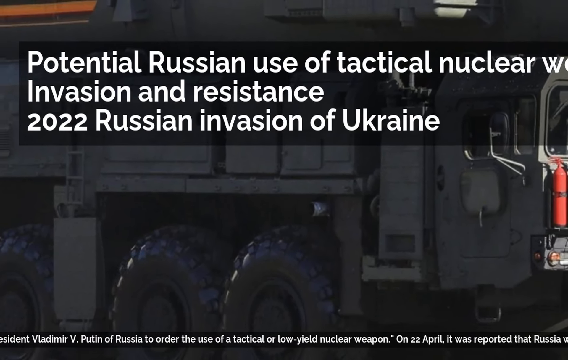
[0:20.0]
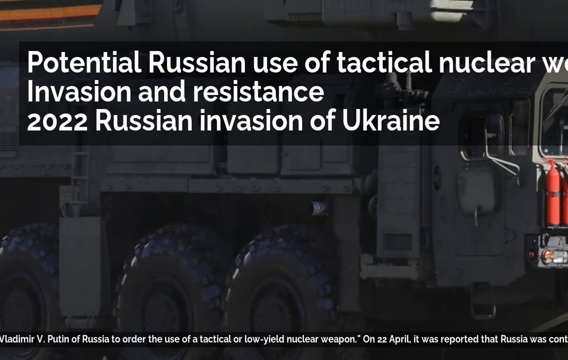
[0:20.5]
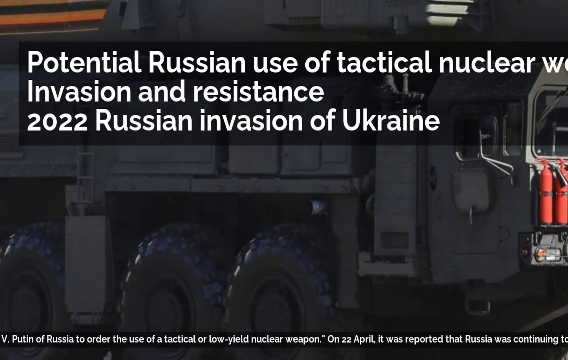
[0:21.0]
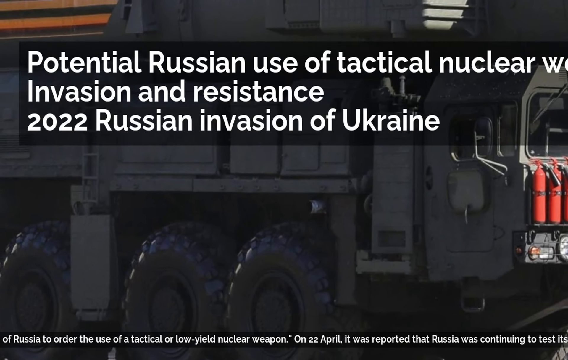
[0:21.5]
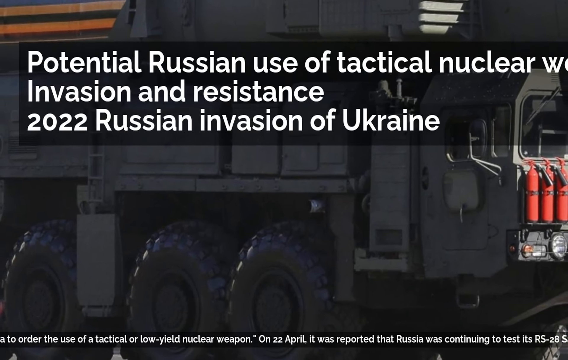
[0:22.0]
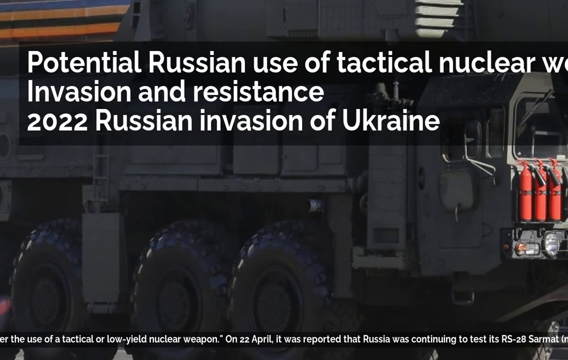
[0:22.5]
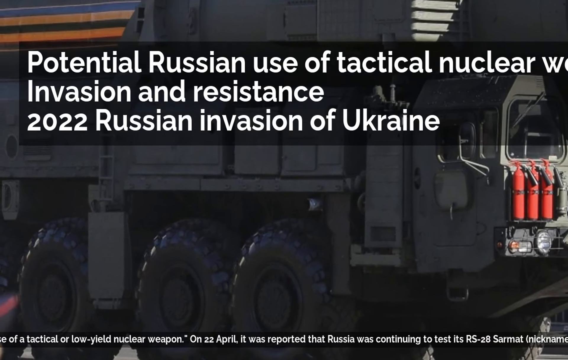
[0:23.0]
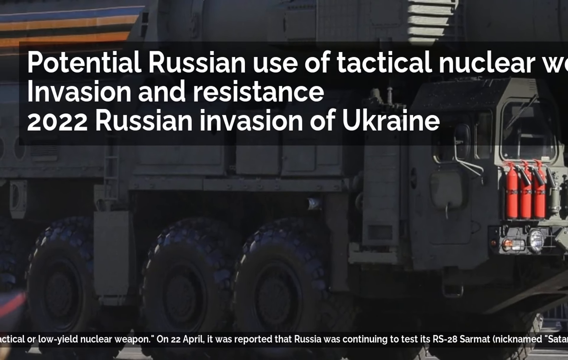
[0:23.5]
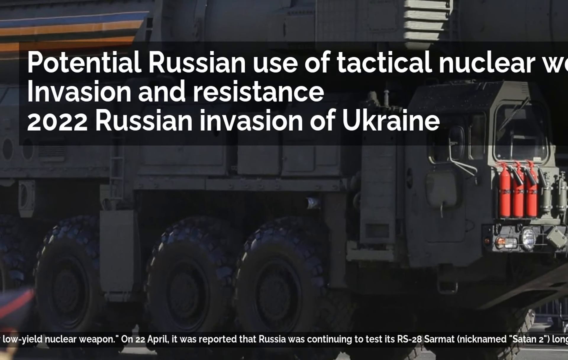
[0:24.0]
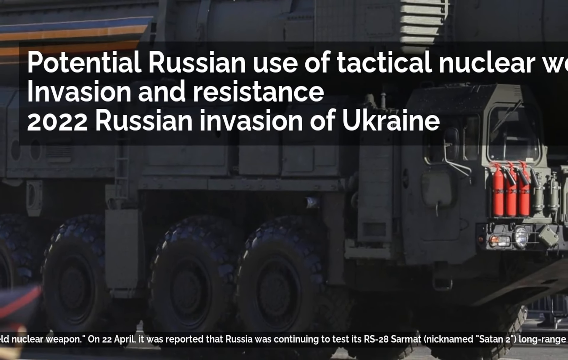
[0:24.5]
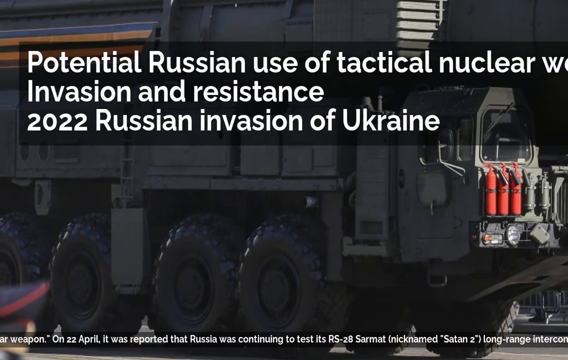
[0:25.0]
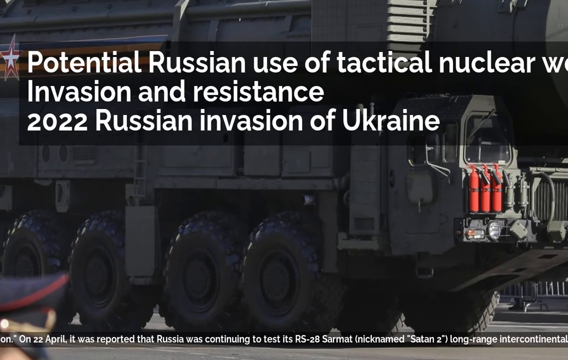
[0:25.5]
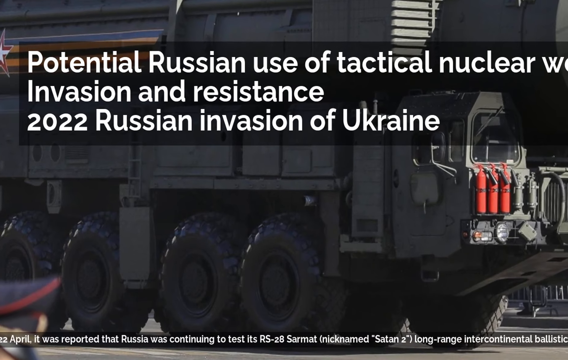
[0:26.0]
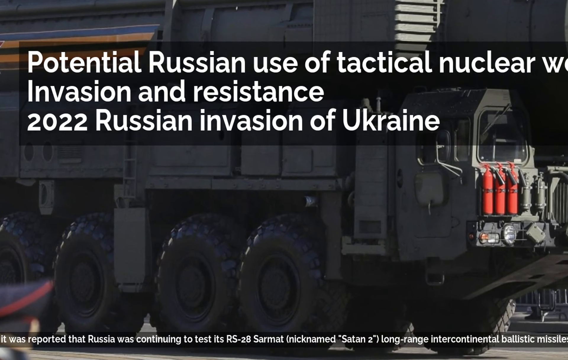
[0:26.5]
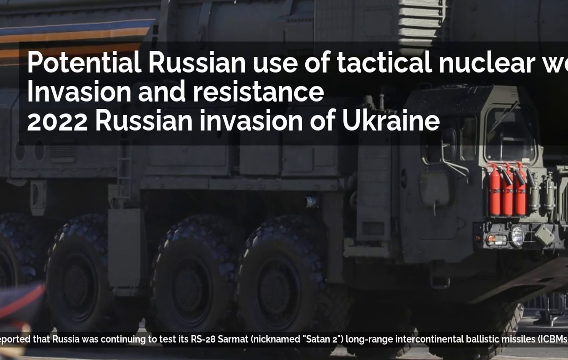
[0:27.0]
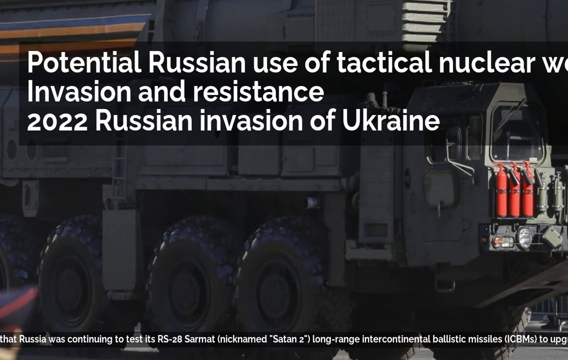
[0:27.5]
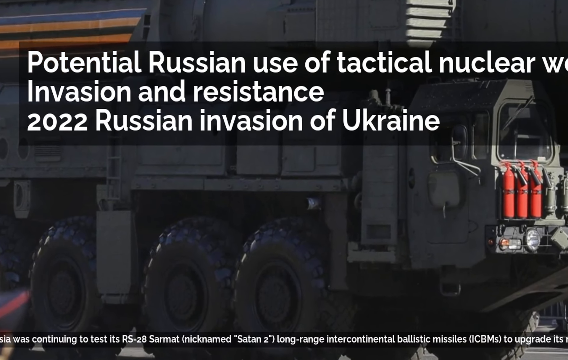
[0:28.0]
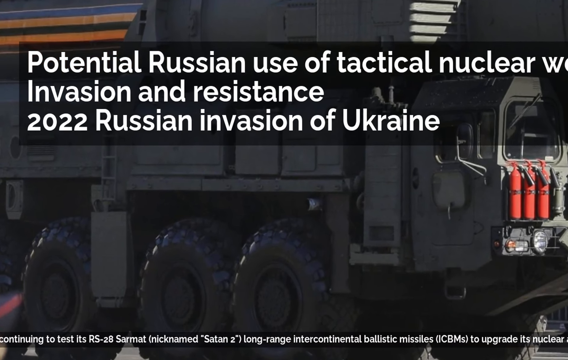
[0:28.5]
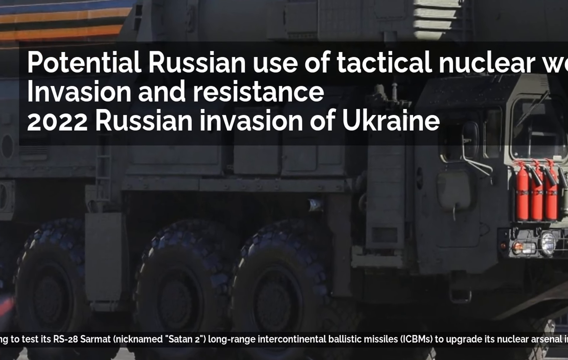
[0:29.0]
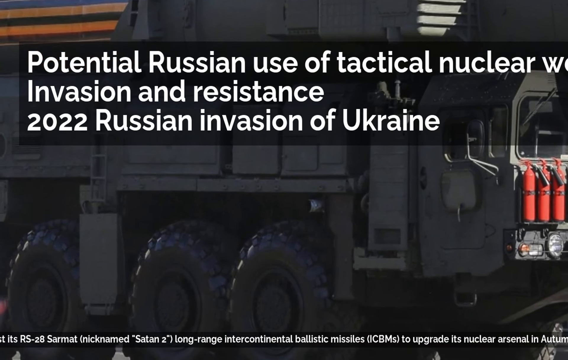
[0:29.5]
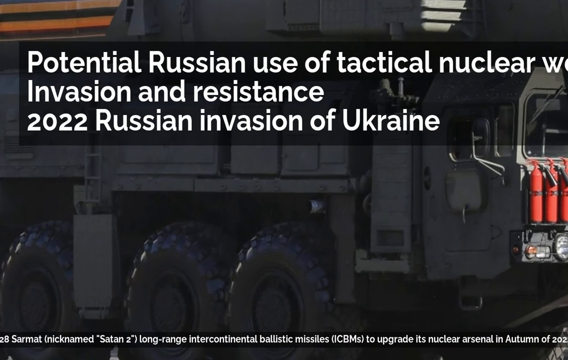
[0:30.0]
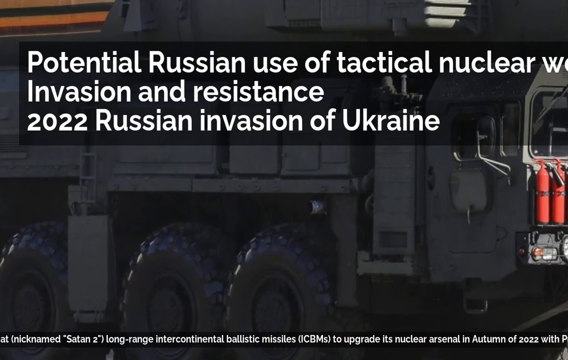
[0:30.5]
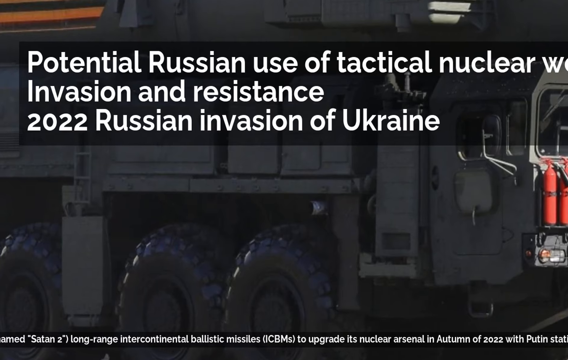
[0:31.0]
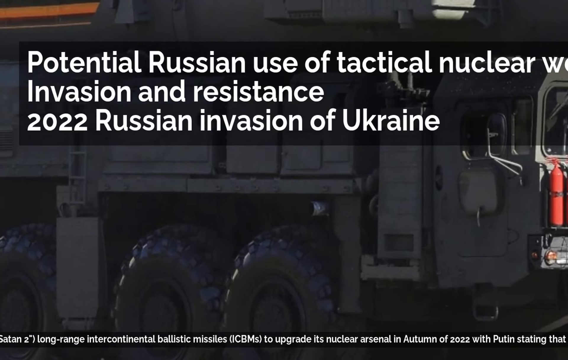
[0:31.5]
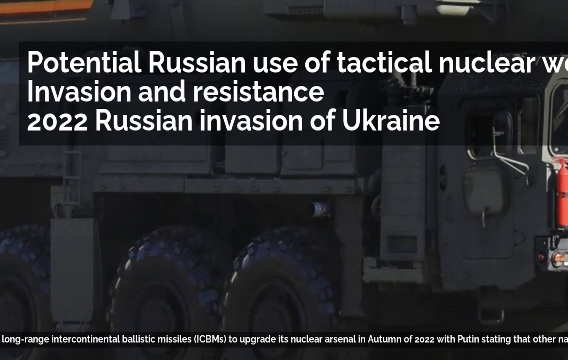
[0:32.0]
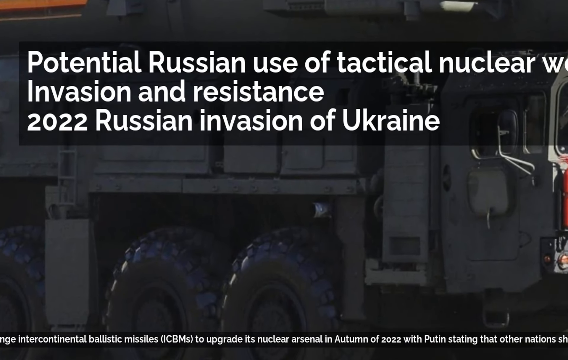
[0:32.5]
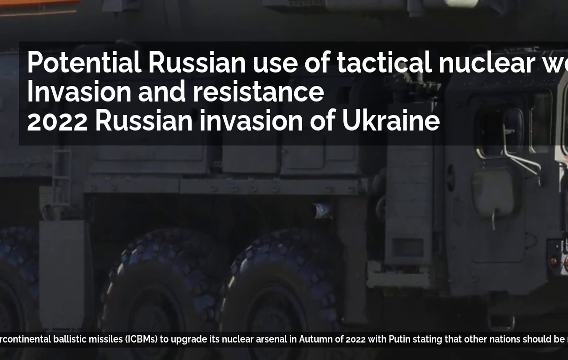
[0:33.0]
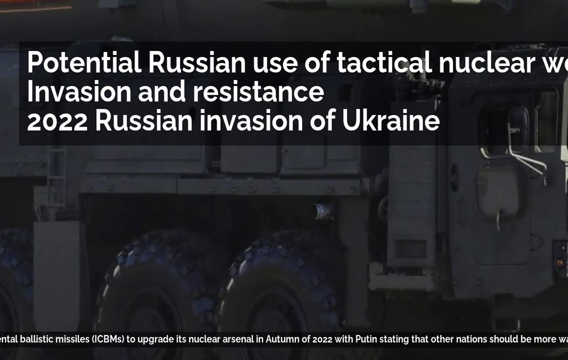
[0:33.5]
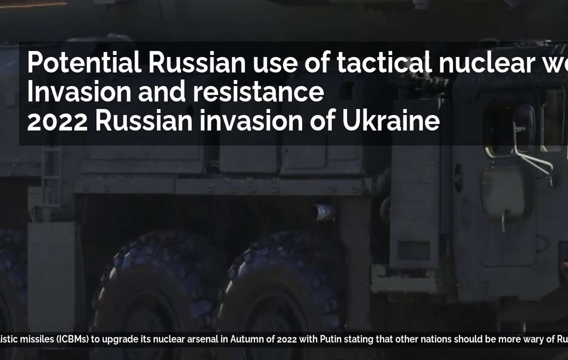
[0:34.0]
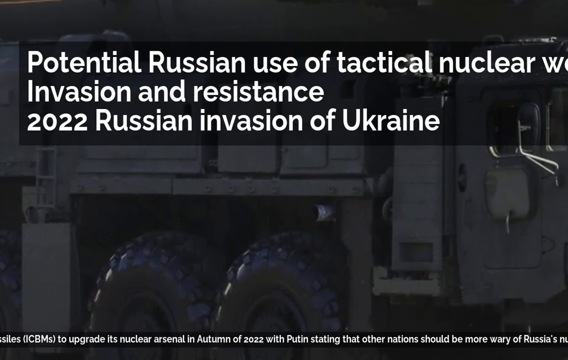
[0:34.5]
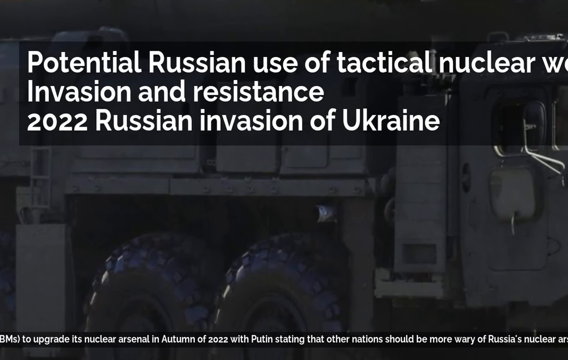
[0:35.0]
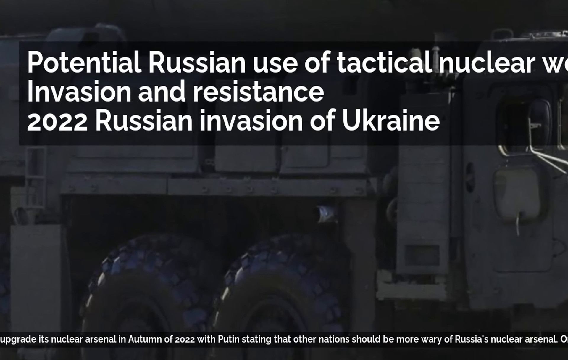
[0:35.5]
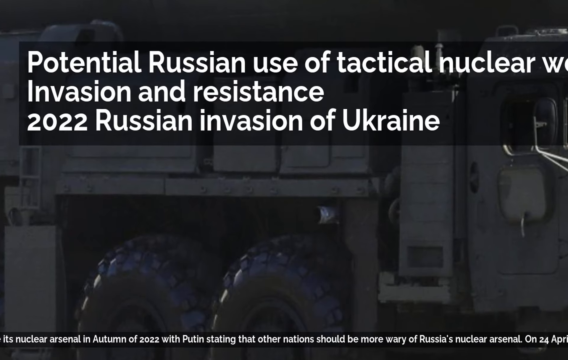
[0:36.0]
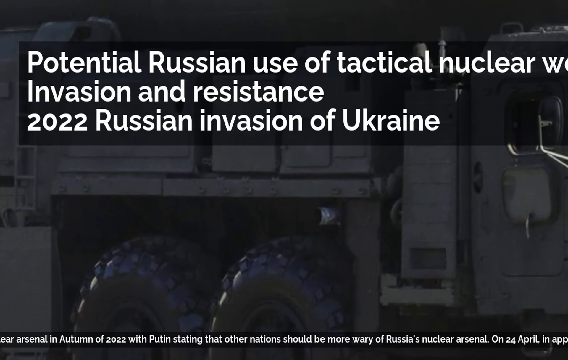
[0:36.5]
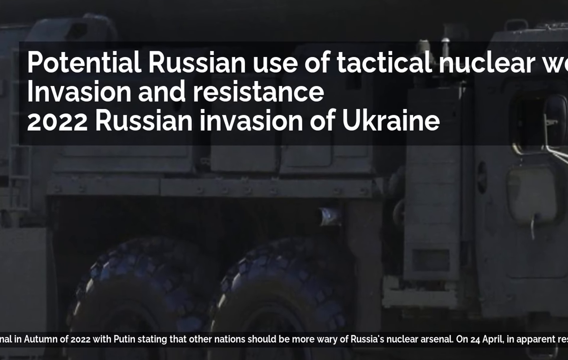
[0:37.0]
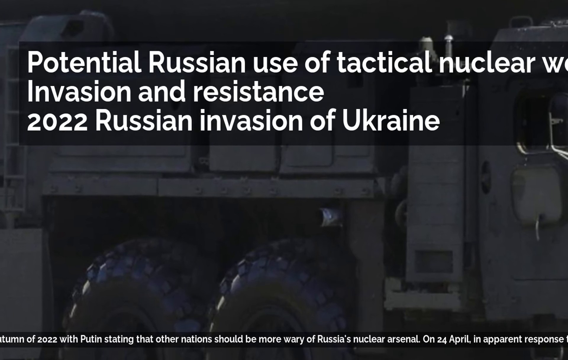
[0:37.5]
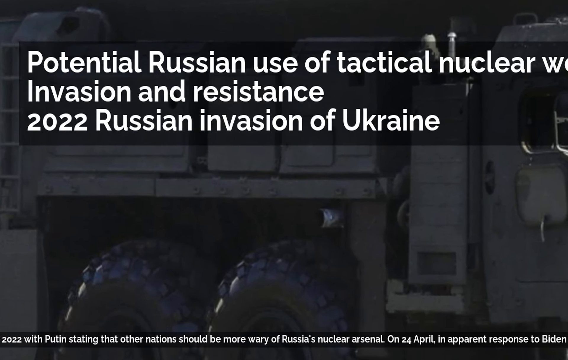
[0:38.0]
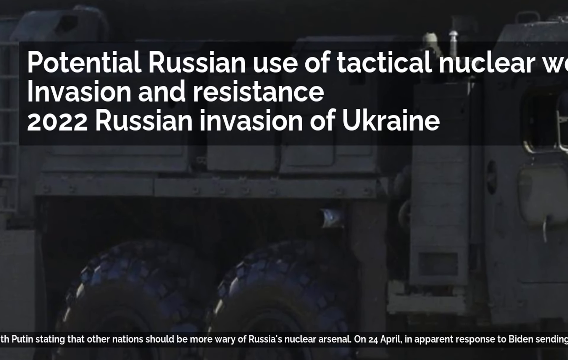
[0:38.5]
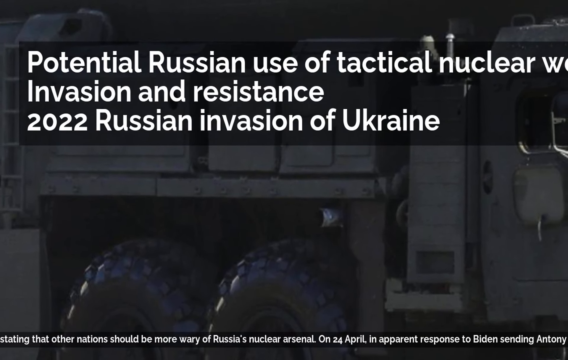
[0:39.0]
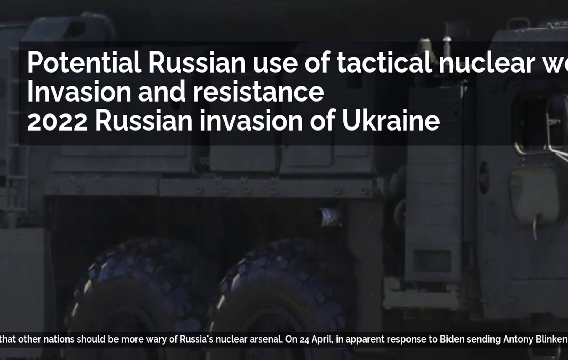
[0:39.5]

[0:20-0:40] The camera zooms in on the military vehicle. It has a matte paint finish in a very dark battleship gray or charcoal gray. Its wheels are very large with very deep, thick tread, probably suited to difficult off-road terrain. At the front, the headlights are covered with wire grills to protect them from breaking. The running text ribbon at the bottom continues: "on the 22nd of April, it was reported that Russia was continuing to test its RS-28 Sarmat nicknamed Satan II, long range intercontinental ballistic missiles or ICBMs to upgrade its nuclear arsenal in autumn of 2022 with Putin stating that other nations should be more wary of Russia's nuclear arsenal. On the 24th of April, in apparent response to Biden, sending Antony Blinken to Kyiev."